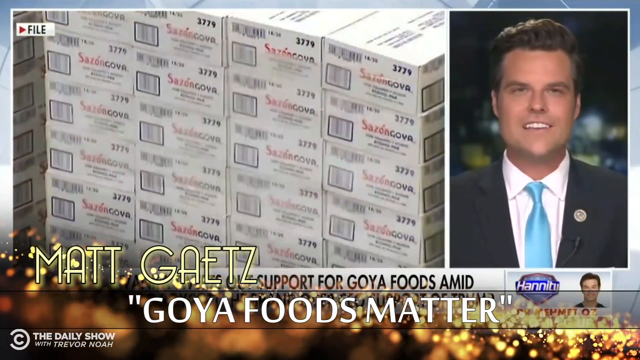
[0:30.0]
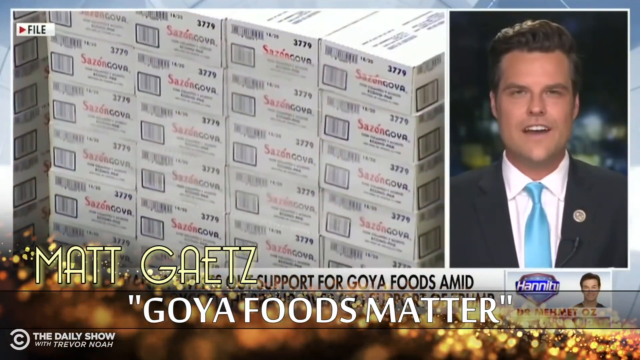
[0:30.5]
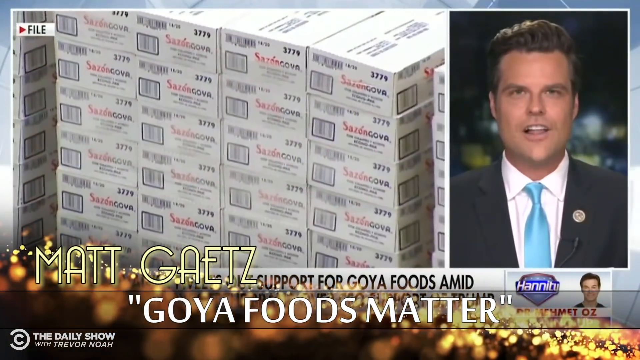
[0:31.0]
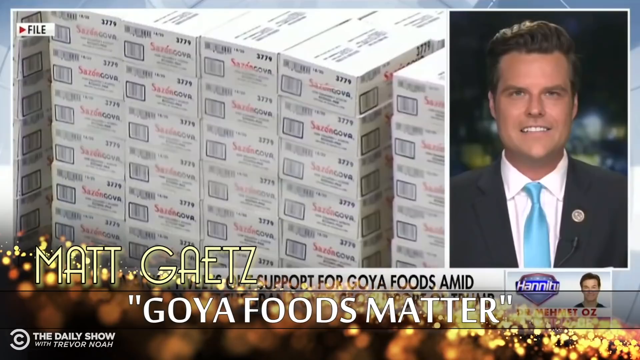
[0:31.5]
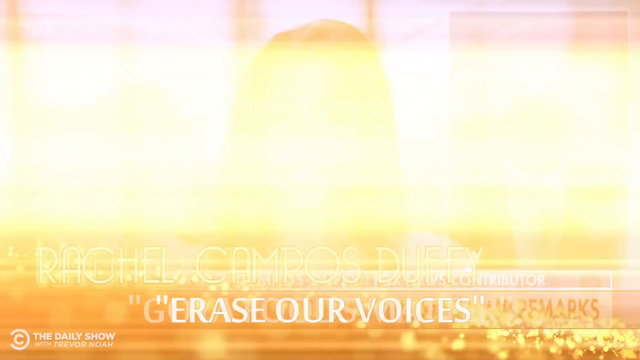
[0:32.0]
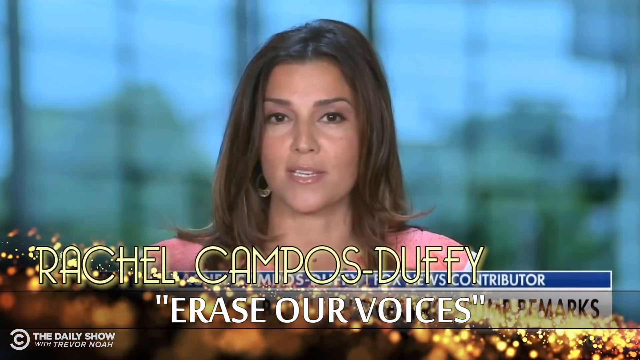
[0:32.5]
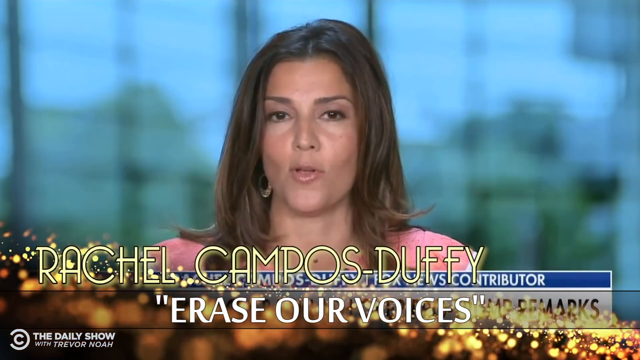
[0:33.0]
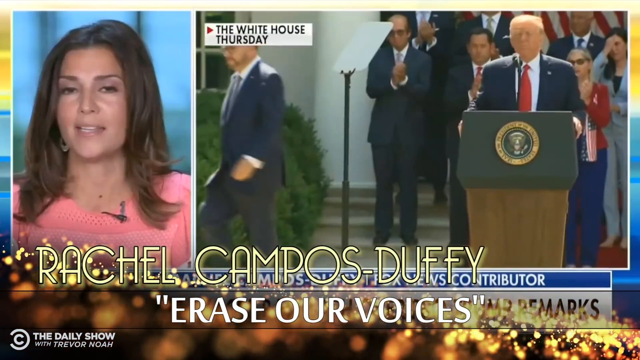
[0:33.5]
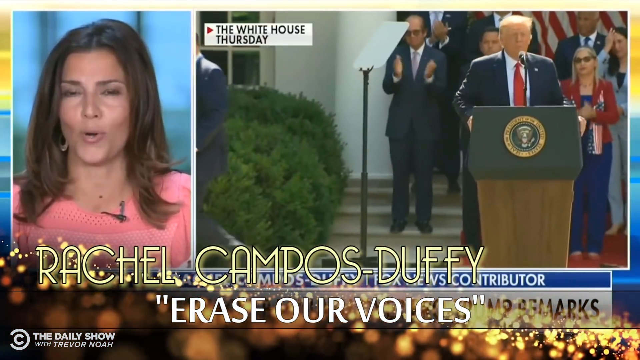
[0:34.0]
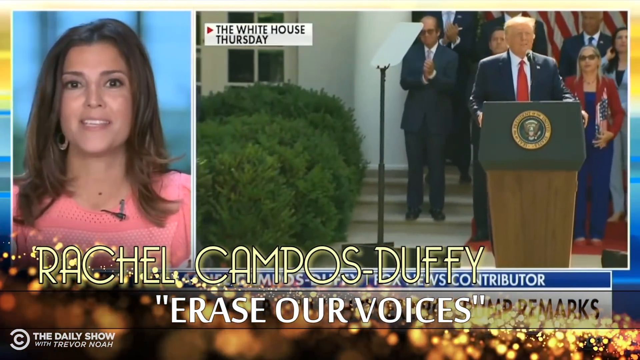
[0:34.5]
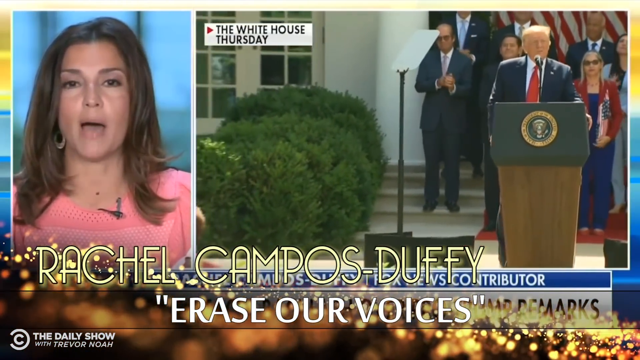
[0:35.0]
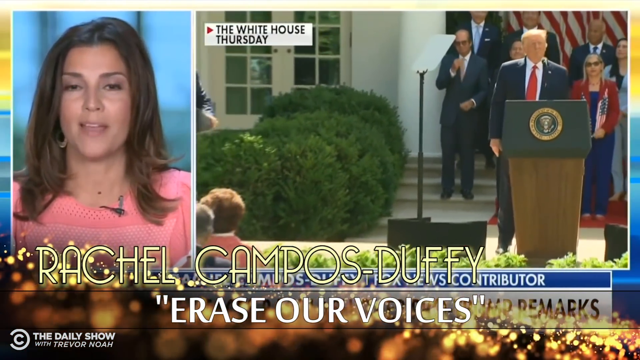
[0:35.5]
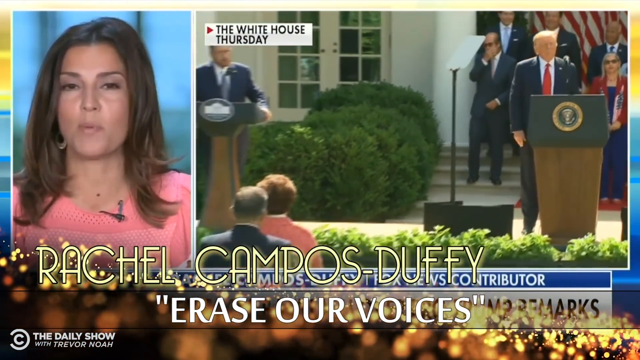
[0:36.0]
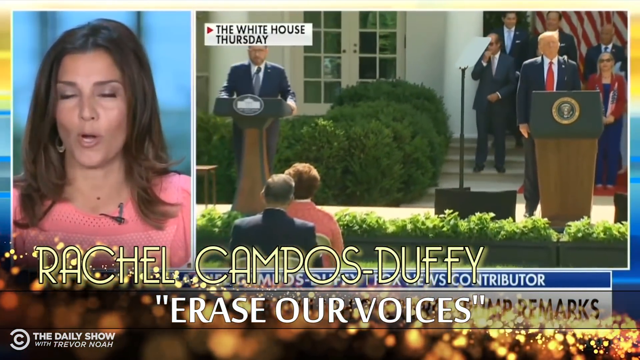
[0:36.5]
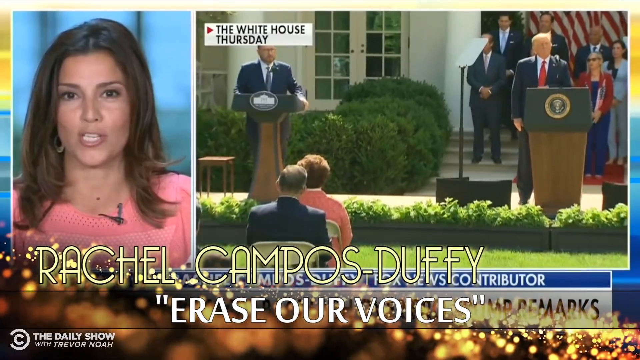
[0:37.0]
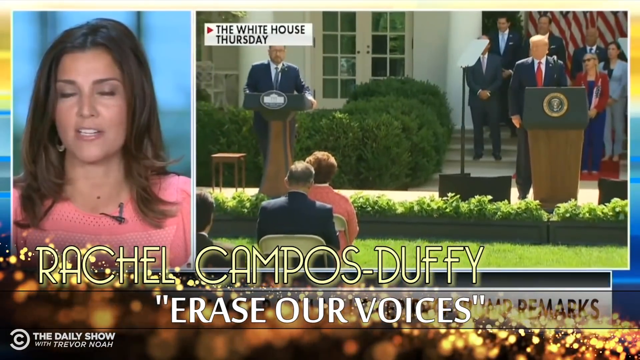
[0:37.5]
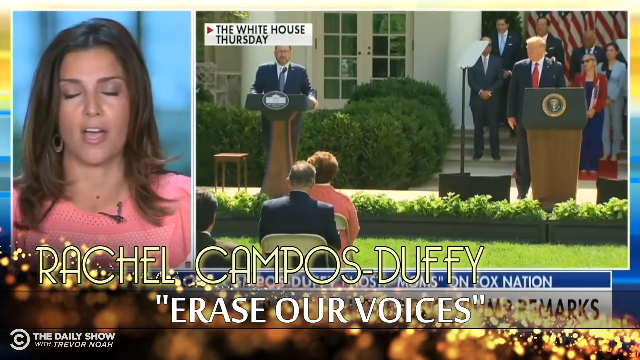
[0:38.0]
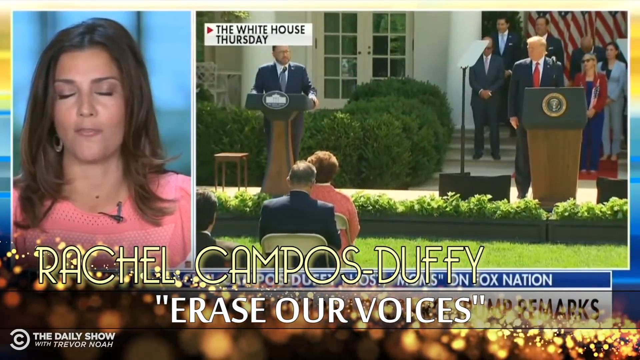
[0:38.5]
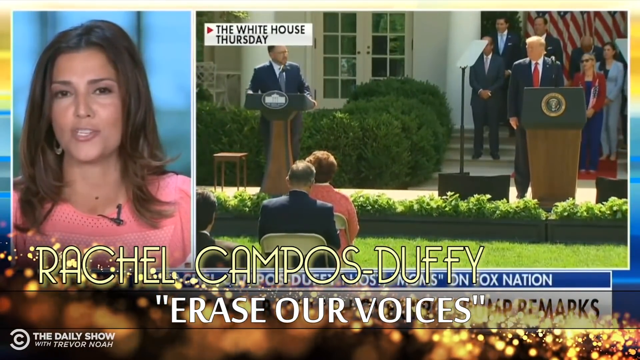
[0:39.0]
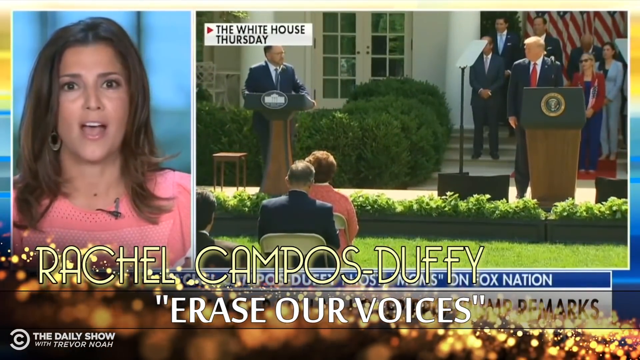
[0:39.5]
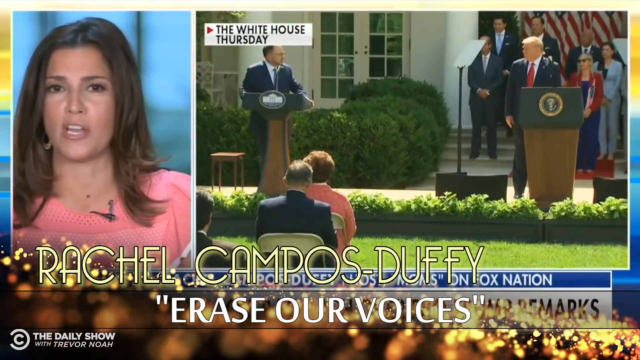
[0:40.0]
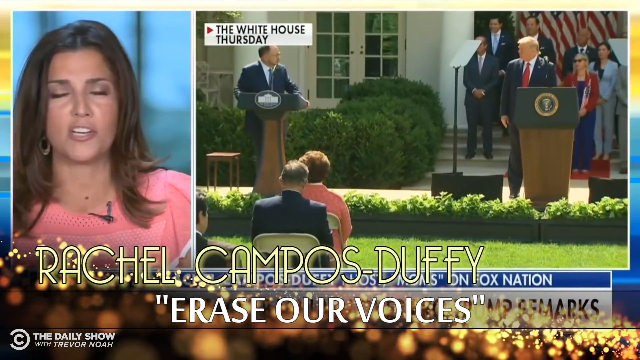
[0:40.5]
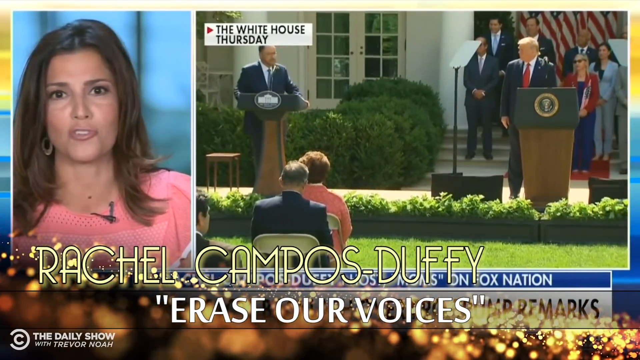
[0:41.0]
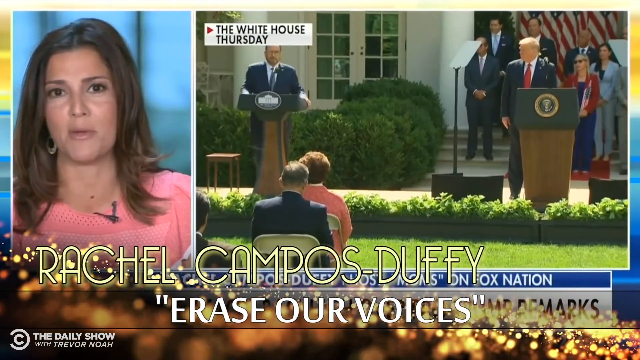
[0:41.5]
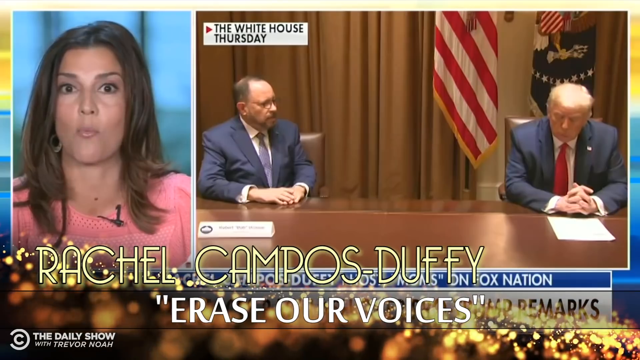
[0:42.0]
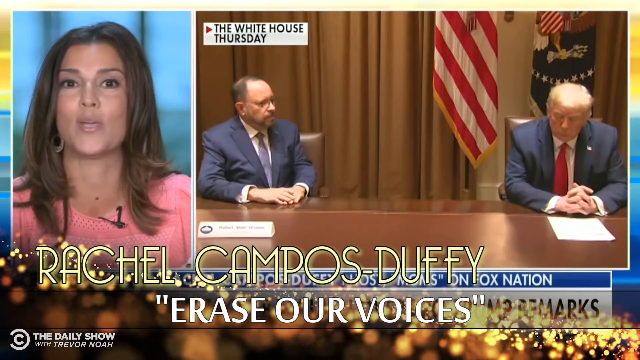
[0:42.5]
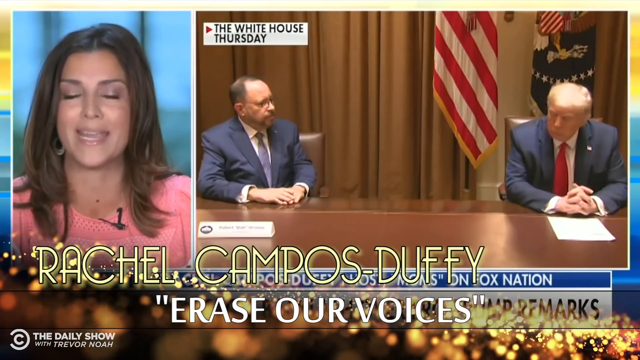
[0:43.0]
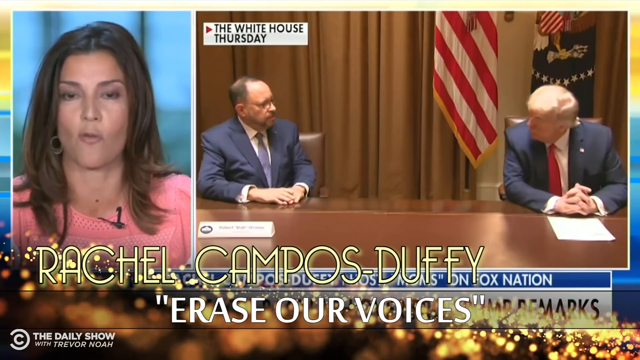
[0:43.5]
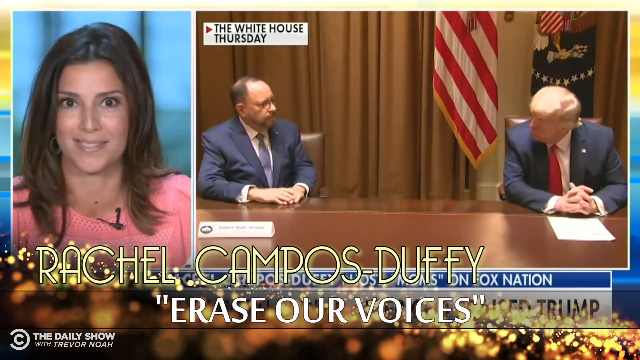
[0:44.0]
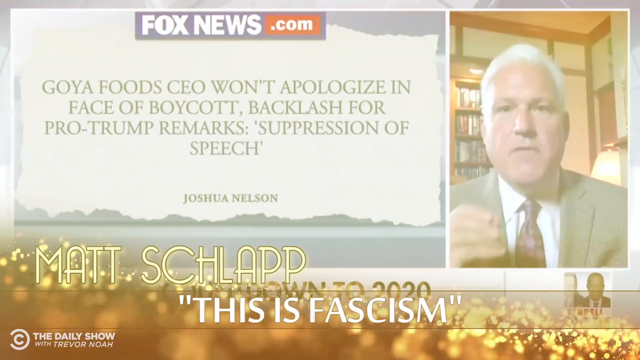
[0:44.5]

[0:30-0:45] In The Daily Show's comedy bit, the 64th Annual Outragees, one of the nominees is apparently Matt Gaetz, with text below reading "Goya Foods Matter." He is doing an interview on Hannity on Fox News, and to the left are images or video of Goya products in boxes. It then transitions to the next nominee, Rachel Campos Duffy, with the text "Erase Our Voices" below her. She is also speaking on Fox News, with a video to her right showing President Trump at a podium at the White House while somebody else at a second podium to his left speaks. It then cuts inside, where the same two men are sitting at a table.